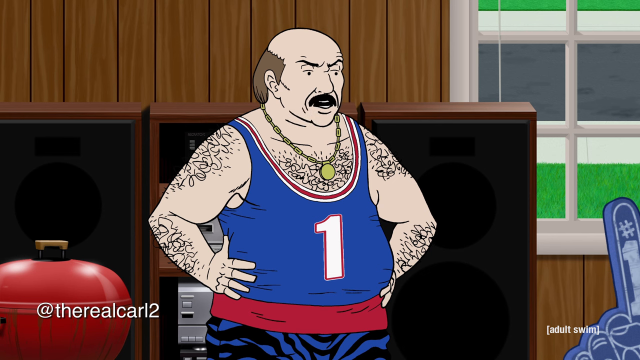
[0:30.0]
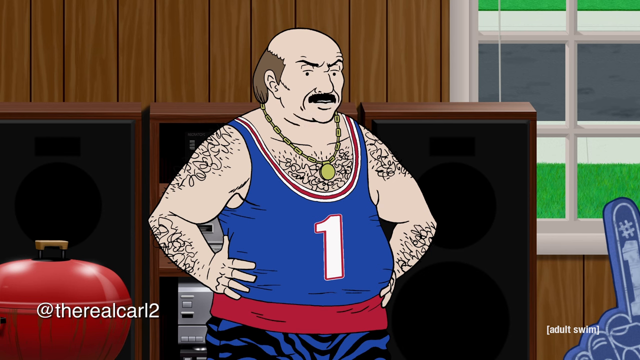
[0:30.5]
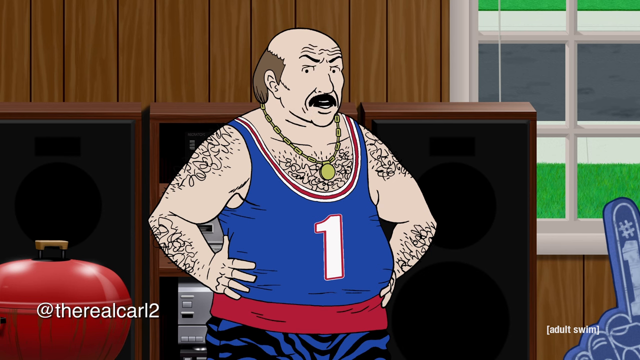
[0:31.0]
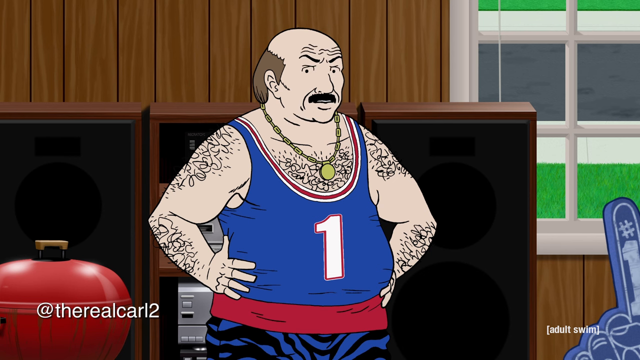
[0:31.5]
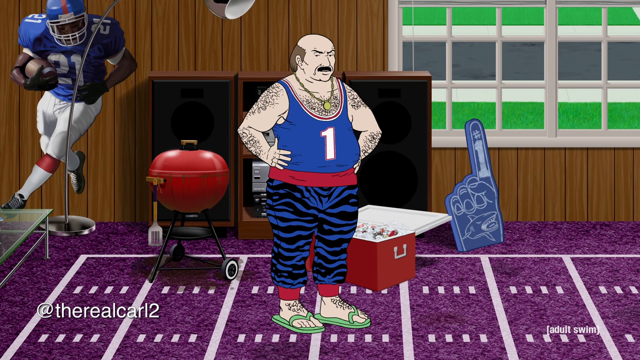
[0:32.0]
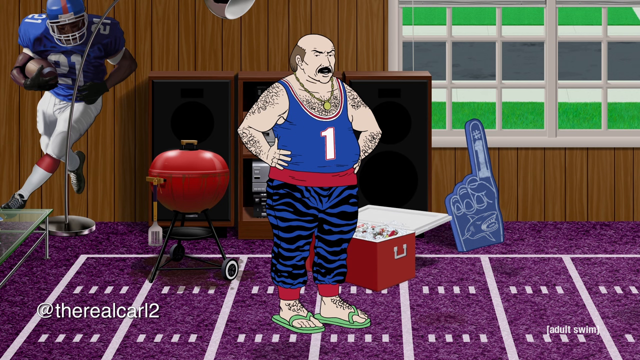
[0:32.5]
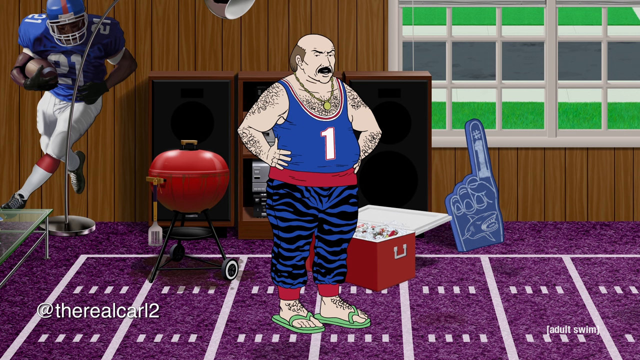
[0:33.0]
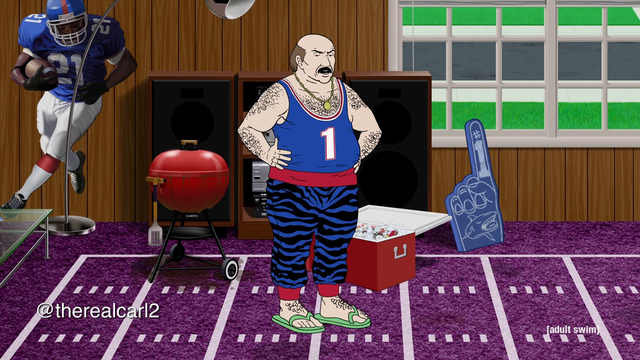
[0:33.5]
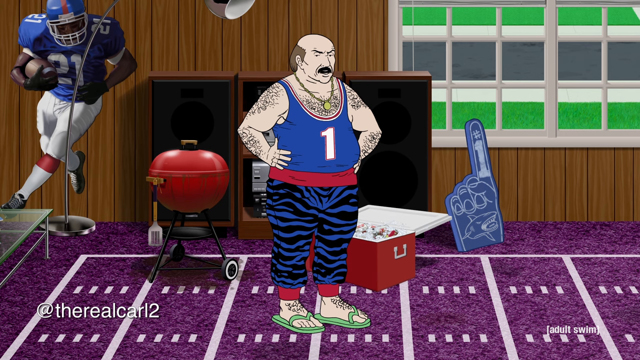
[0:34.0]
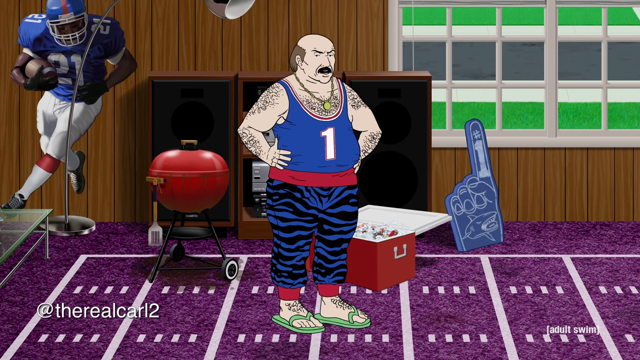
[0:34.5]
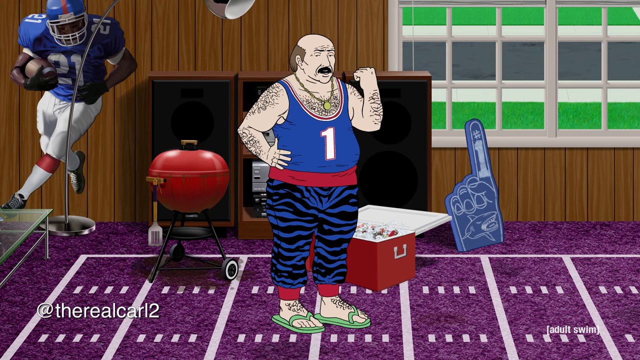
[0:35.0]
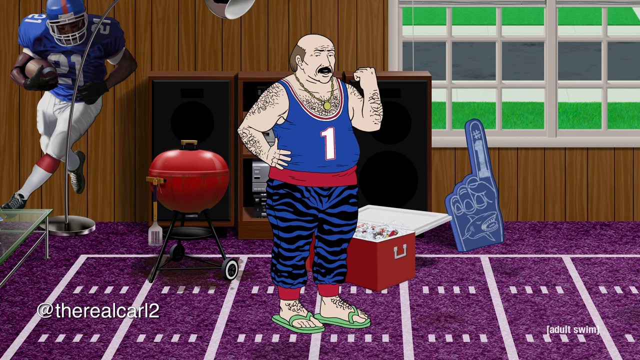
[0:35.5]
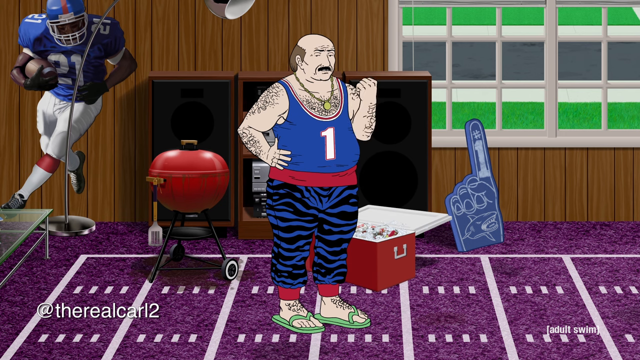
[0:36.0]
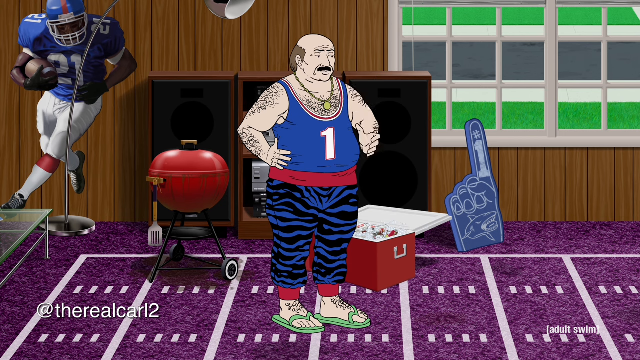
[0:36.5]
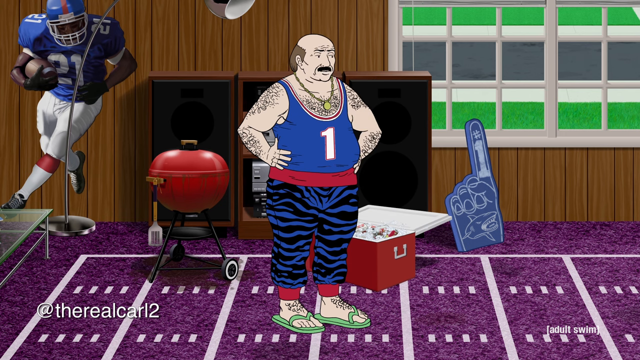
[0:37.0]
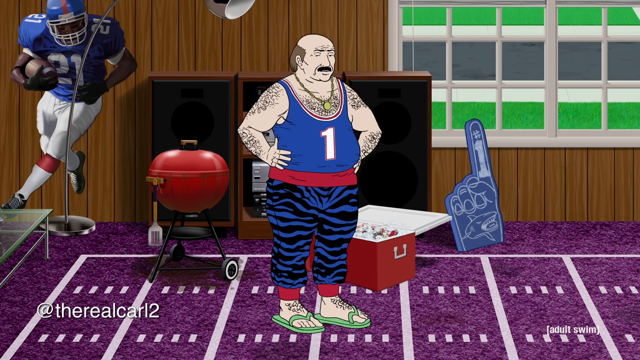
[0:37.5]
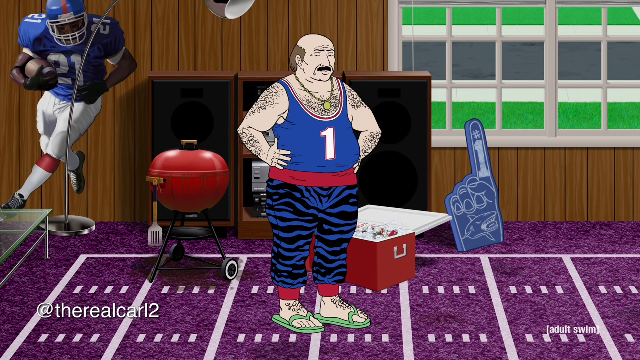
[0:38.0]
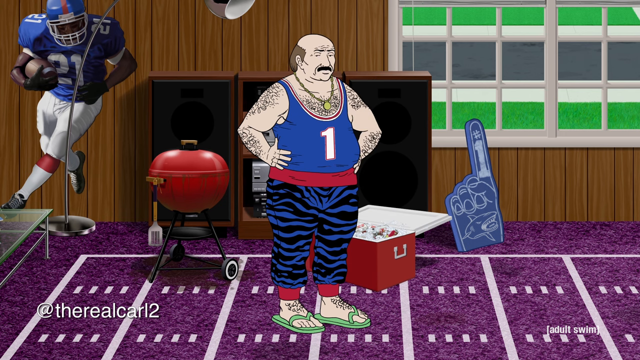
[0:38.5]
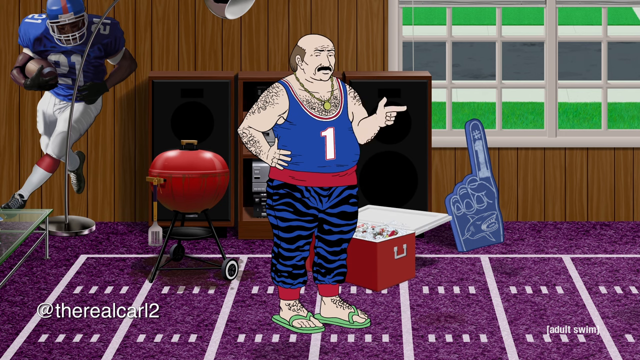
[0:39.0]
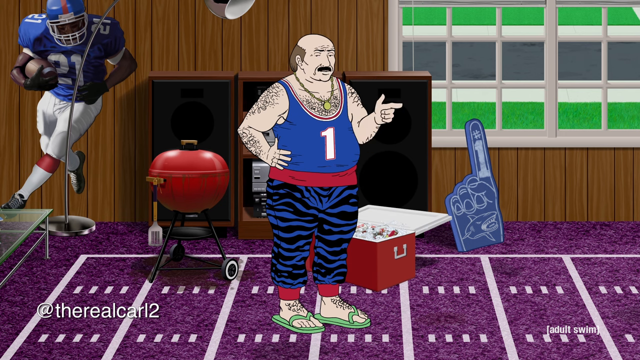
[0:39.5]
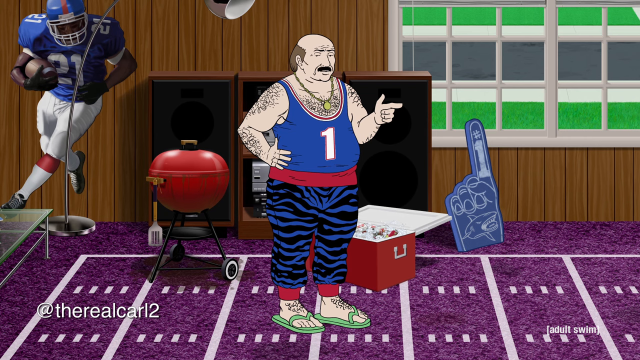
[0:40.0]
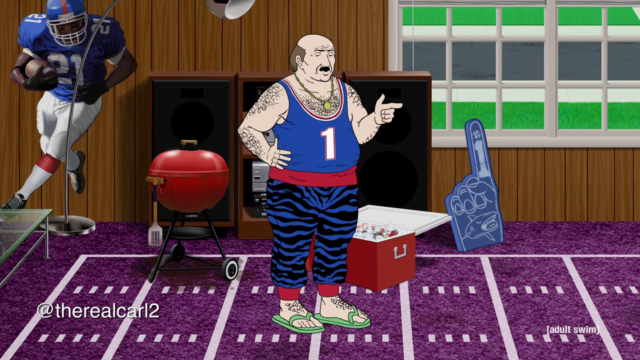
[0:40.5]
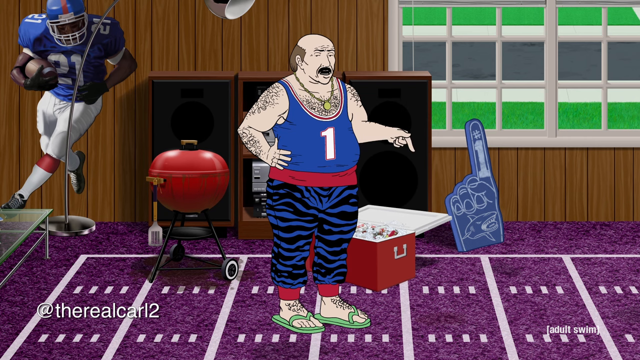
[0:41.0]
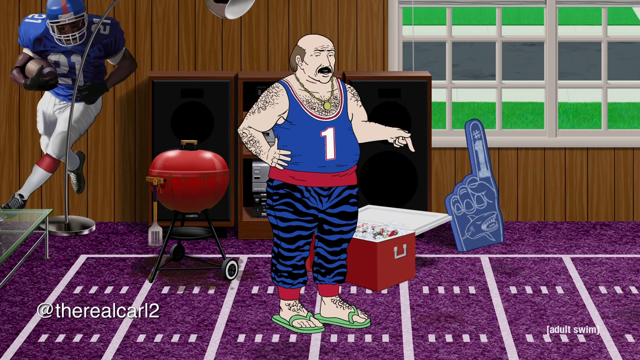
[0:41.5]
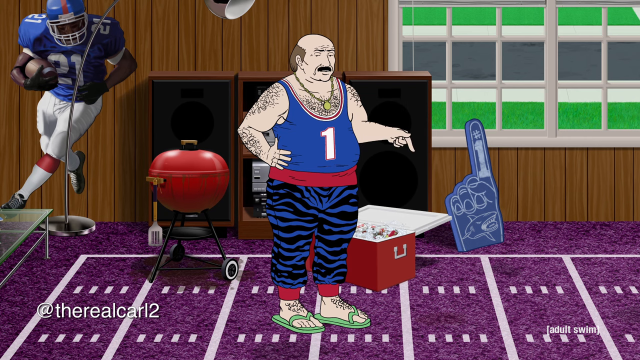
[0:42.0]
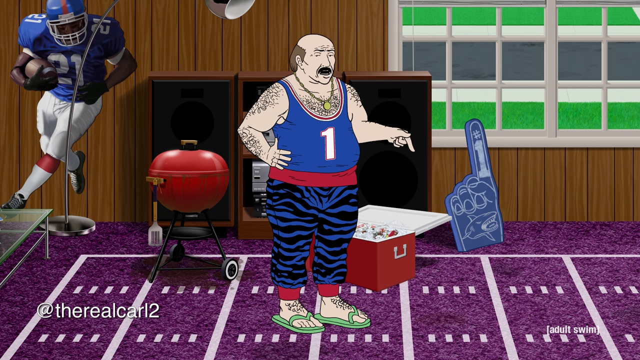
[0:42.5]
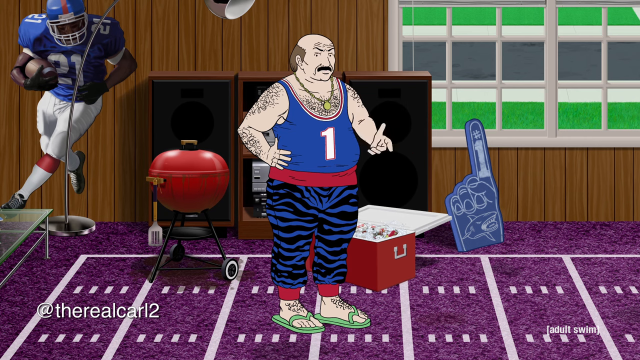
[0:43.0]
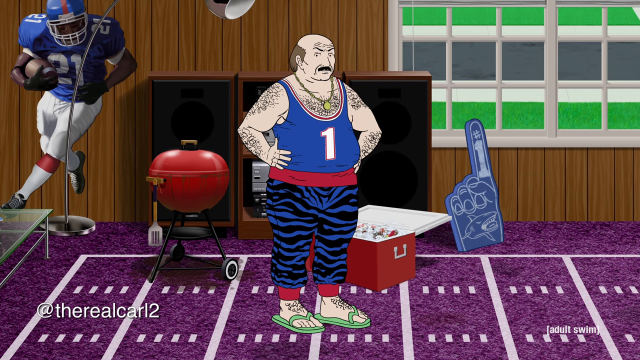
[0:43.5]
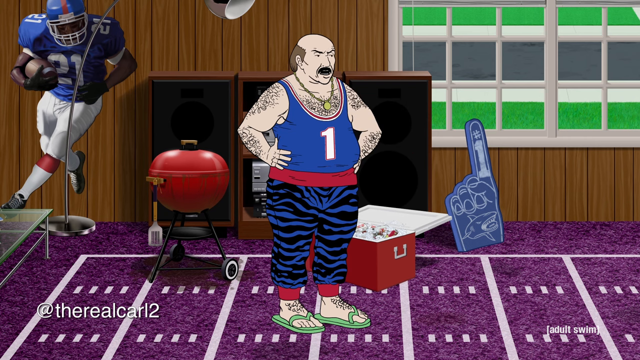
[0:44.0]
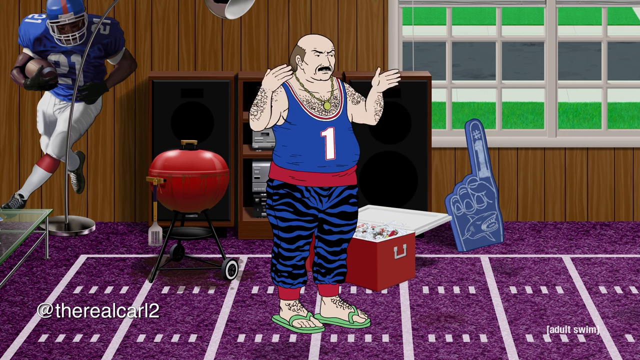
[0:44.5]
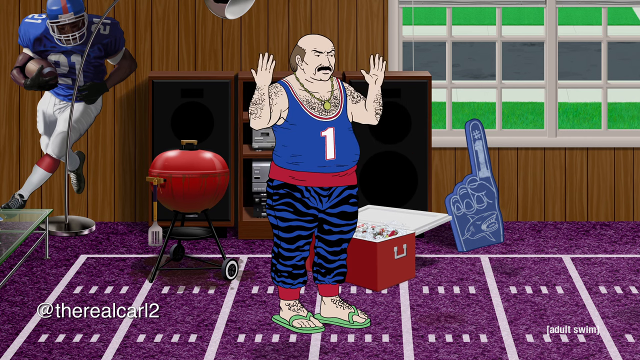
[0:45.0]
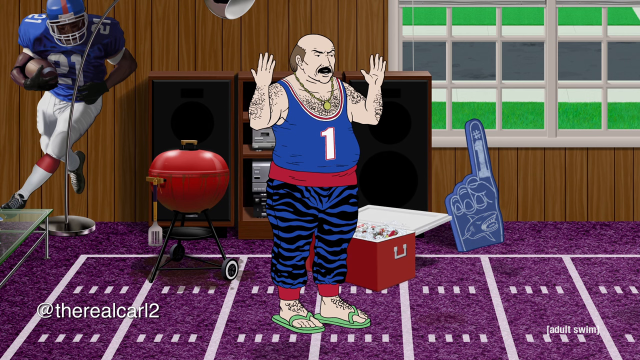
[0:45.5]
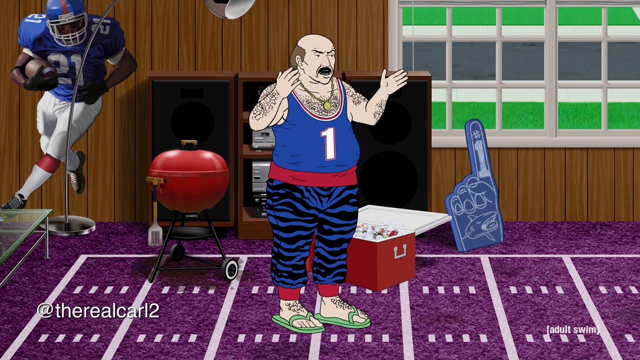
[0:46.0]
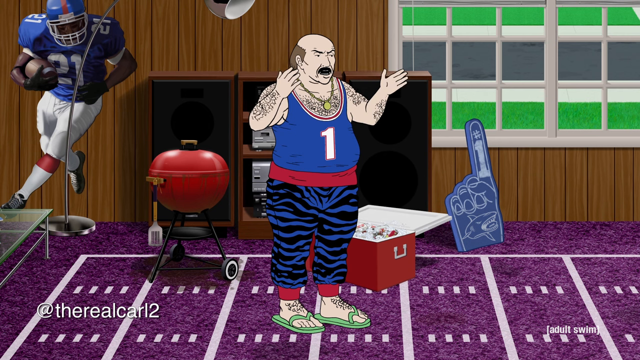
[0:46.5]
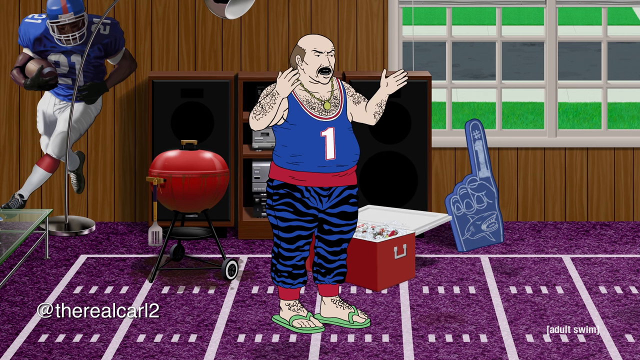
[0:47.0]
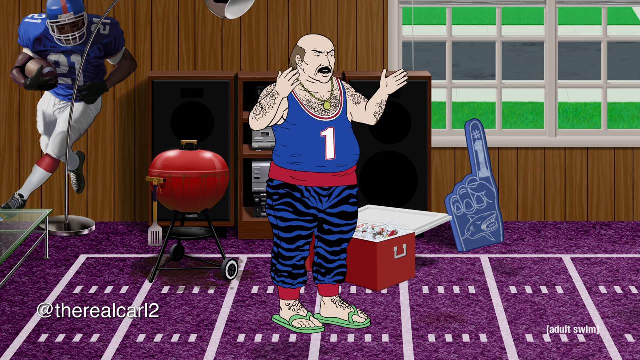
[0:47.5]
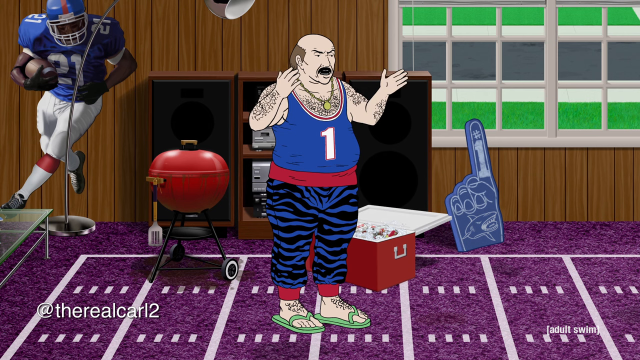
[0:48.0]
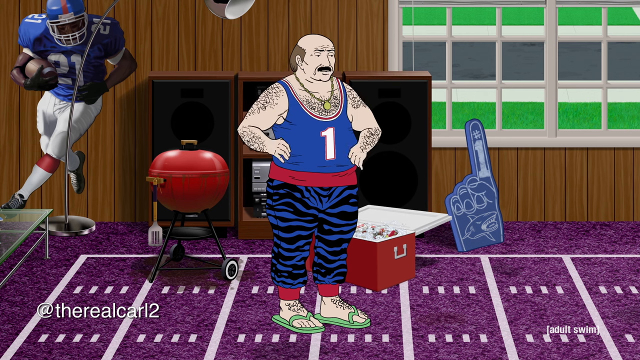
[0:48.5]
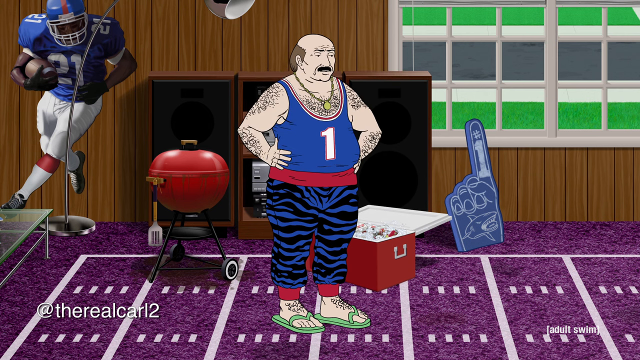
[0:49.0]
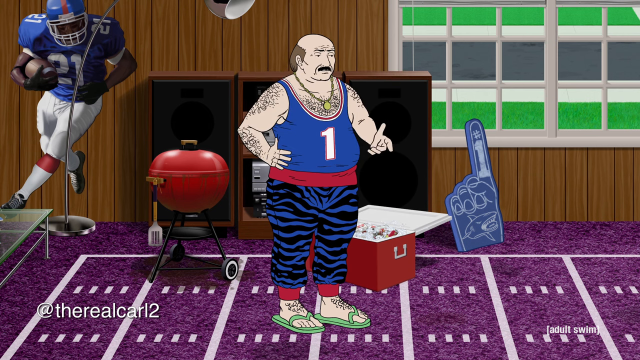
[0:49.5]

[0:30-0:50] A close-up shows the man in his blue sleeveless jersey with the number one, red stripes around the rim and a red stripe at the bottom. Hair covers his body, sticking out of his chest and down his arms. He is bald on top and wears a large gold medallion on a large gold necklace. A barbecue grill and an entertainment system are behind him. He talks, puts his finger down and says to mark his words, then stands with his hands on his hips.